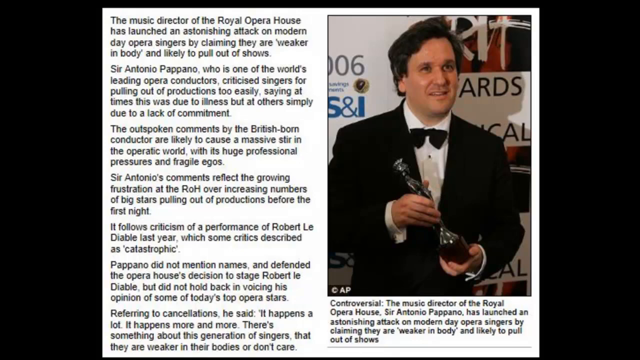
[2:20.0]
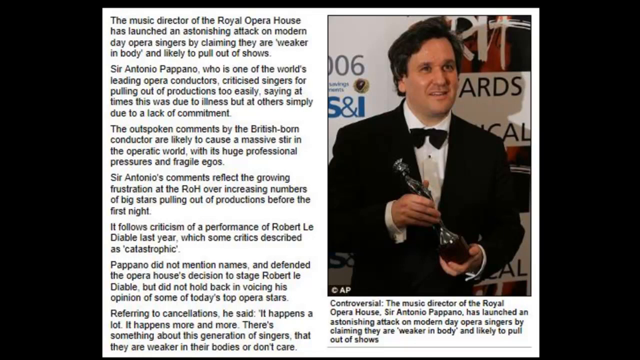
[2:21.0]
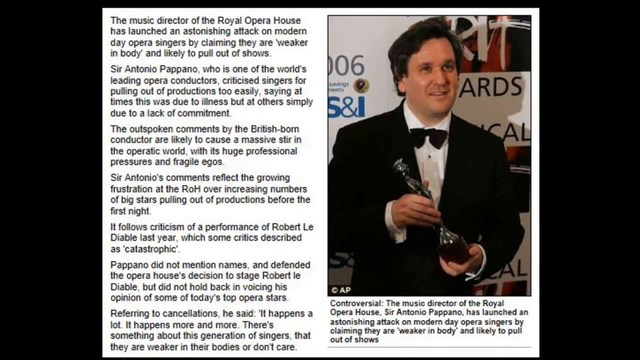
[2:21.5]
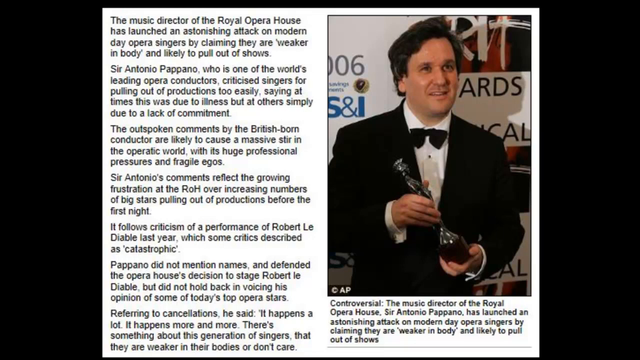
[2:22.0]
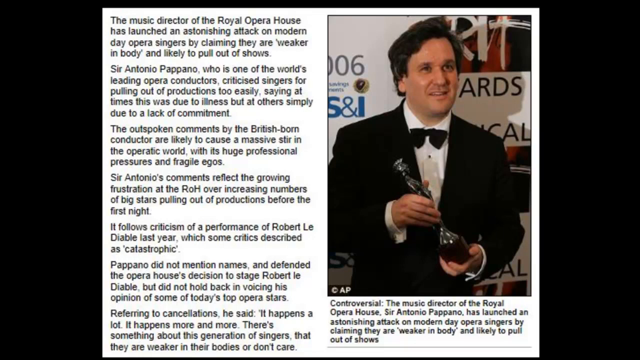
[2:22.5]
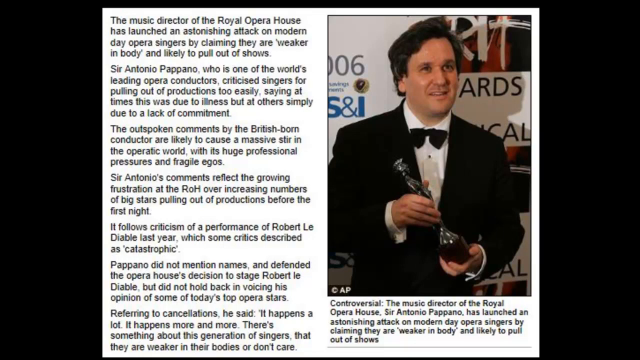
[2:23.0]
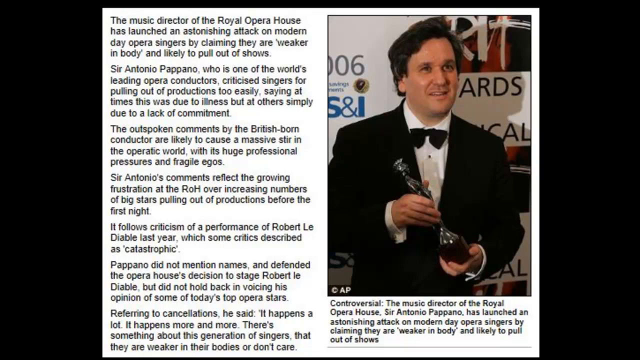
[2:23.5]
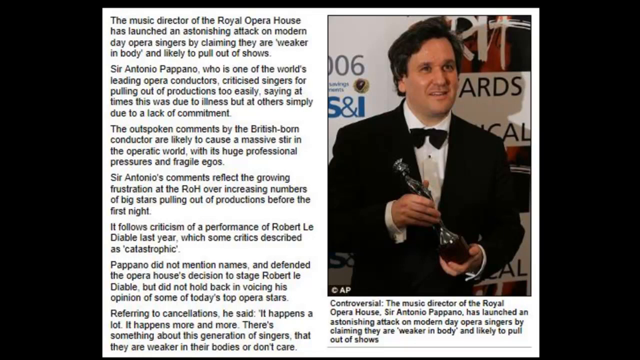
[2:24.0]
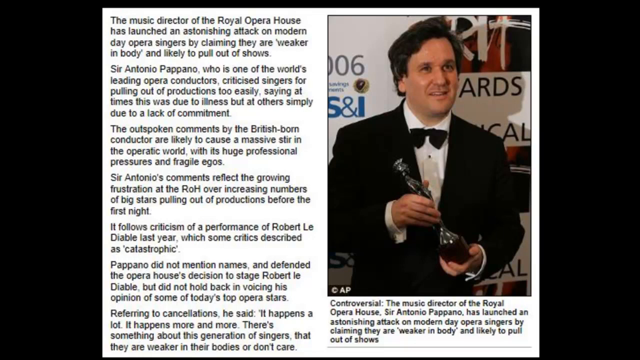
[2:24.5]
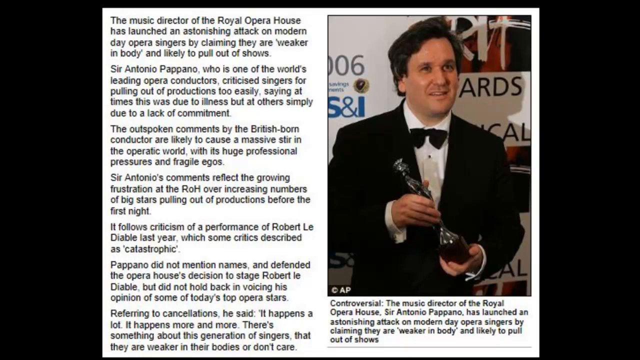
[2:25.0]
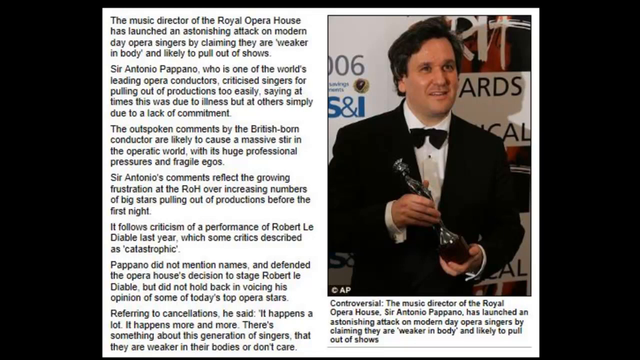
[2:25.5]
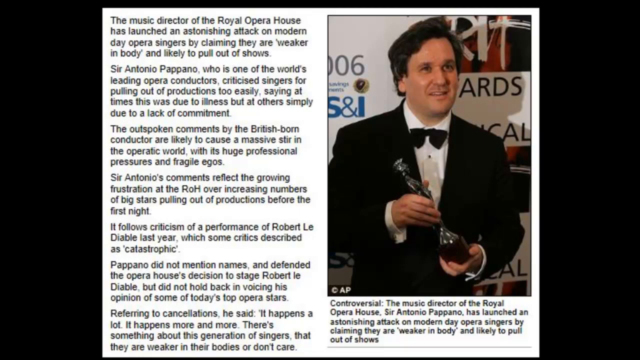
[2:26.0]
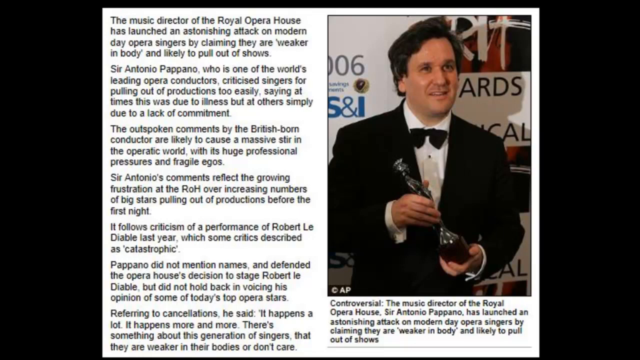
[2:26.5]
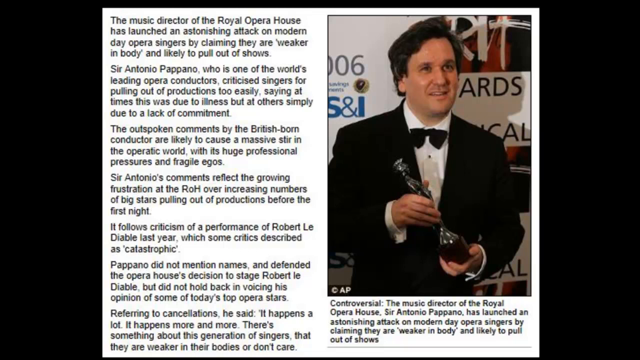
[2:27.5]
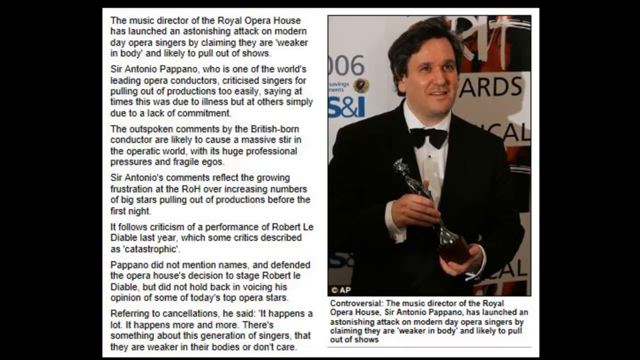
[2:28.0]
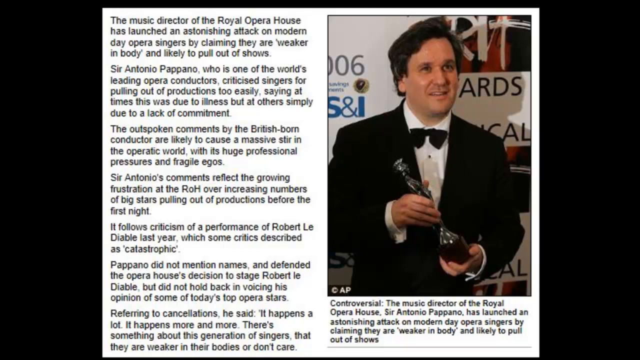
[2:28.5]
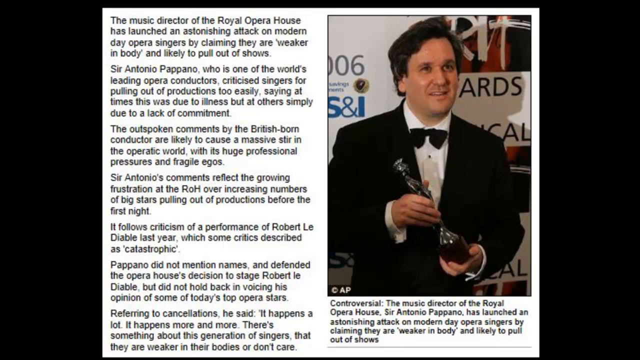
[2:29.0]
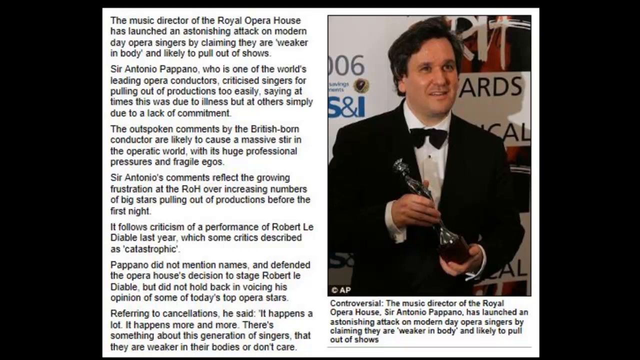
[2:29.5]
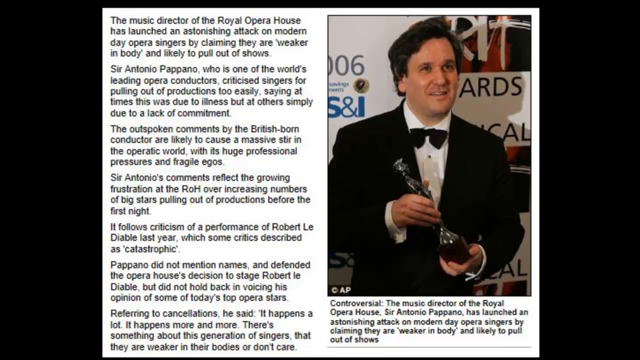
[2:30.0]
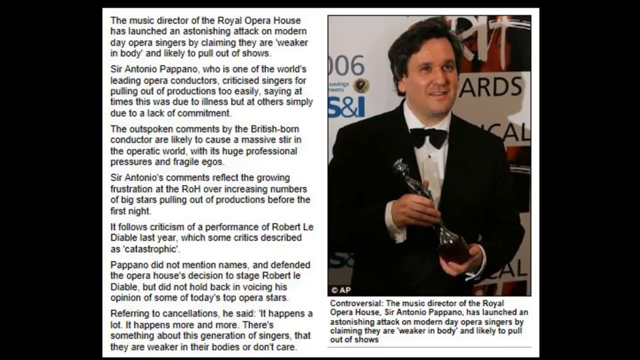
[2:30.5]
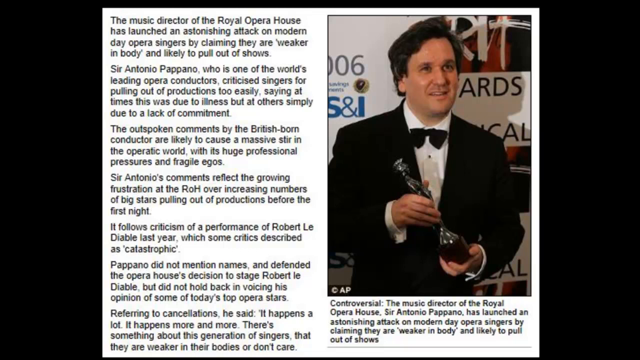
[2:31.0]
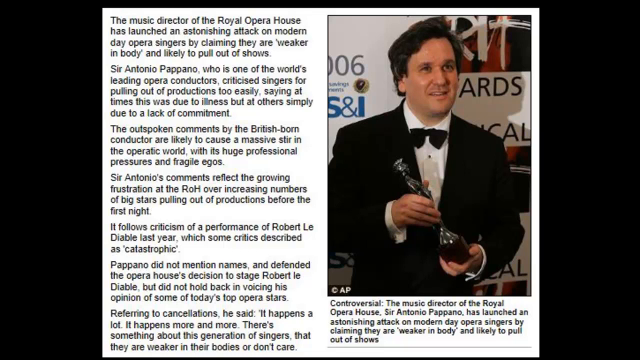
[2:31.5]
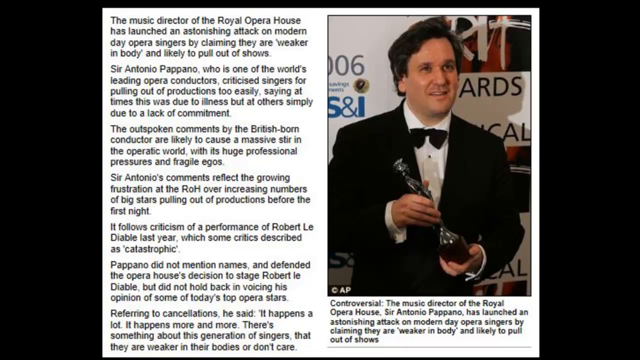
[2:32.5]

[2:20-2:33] A musician is shown receiving an award, with text beside him, including black text and a white icon next to him. He looks very happy that he won. A Black man in a black suit holds up a trophy in the middle of various pieces of text.